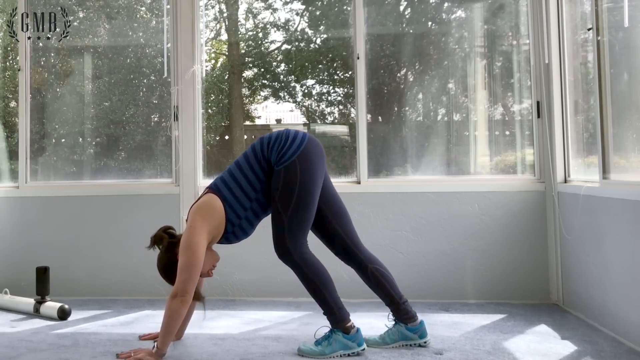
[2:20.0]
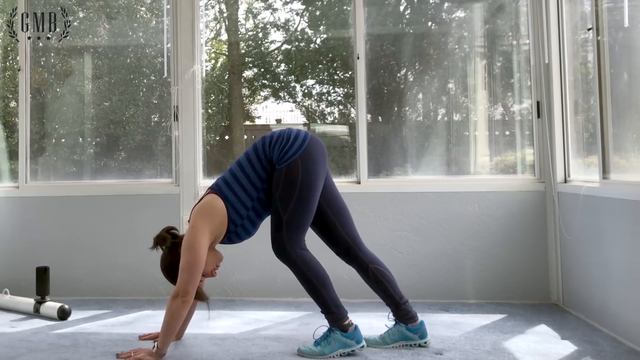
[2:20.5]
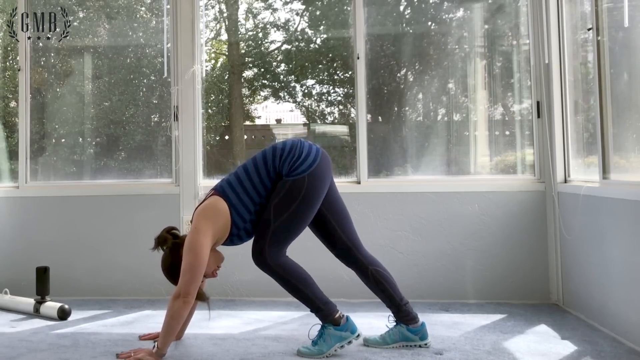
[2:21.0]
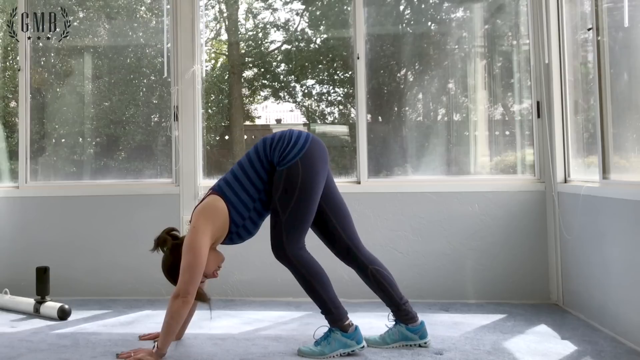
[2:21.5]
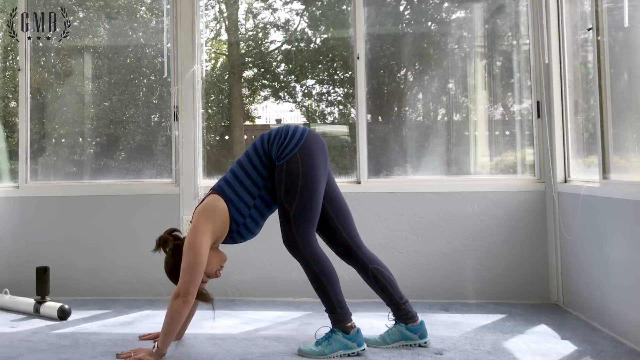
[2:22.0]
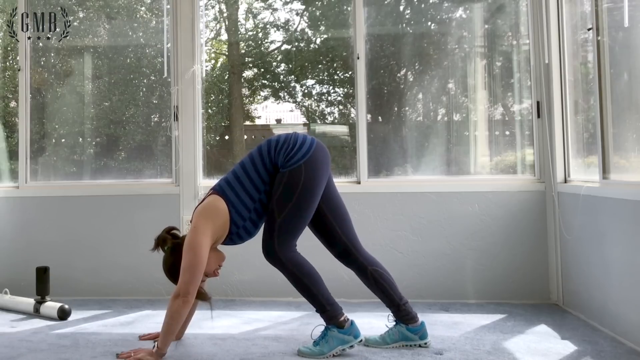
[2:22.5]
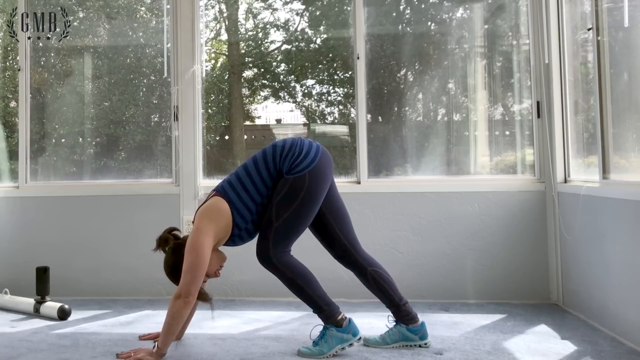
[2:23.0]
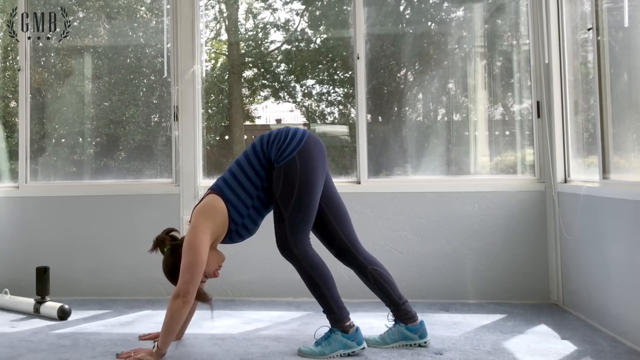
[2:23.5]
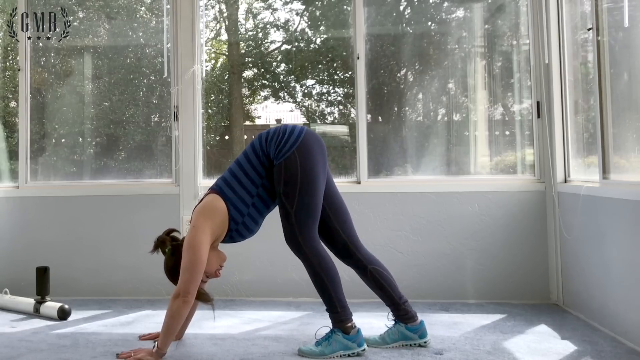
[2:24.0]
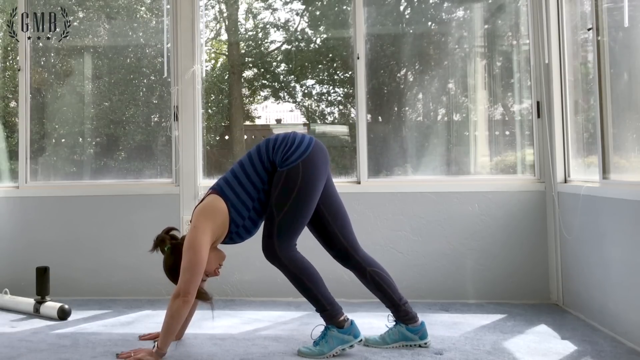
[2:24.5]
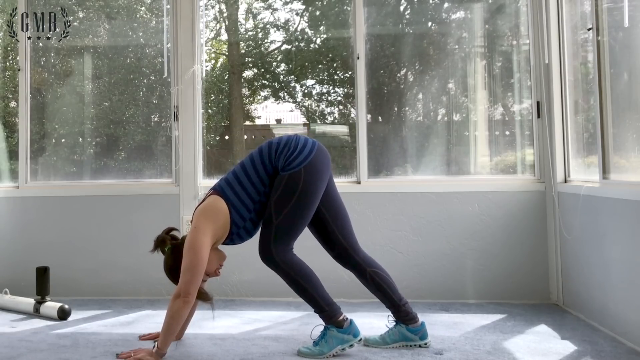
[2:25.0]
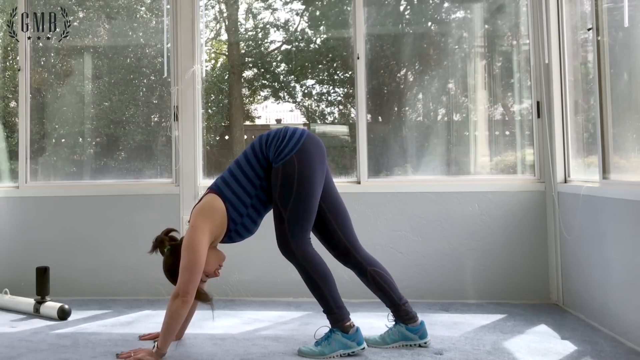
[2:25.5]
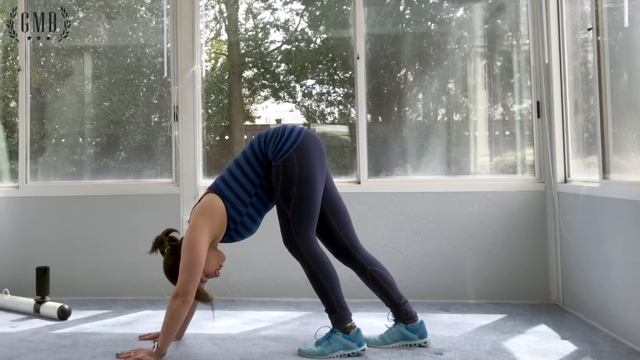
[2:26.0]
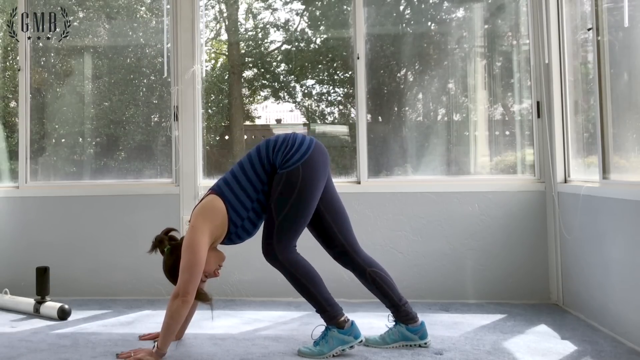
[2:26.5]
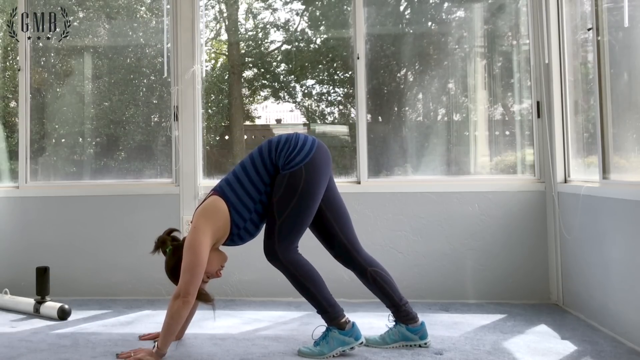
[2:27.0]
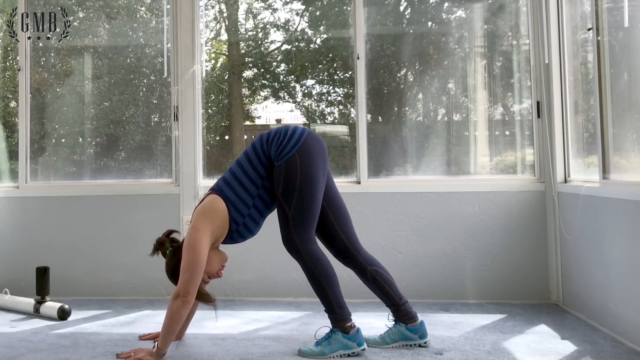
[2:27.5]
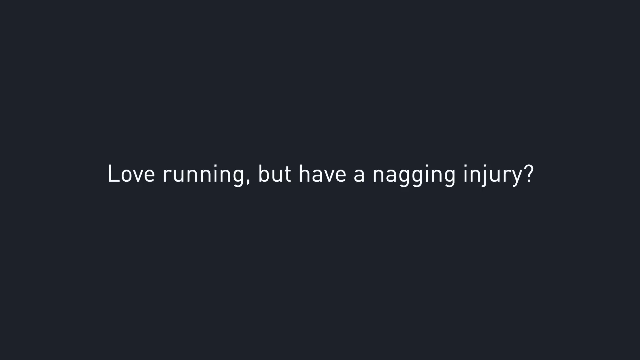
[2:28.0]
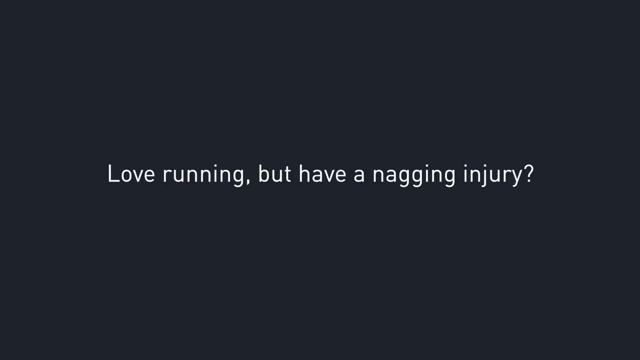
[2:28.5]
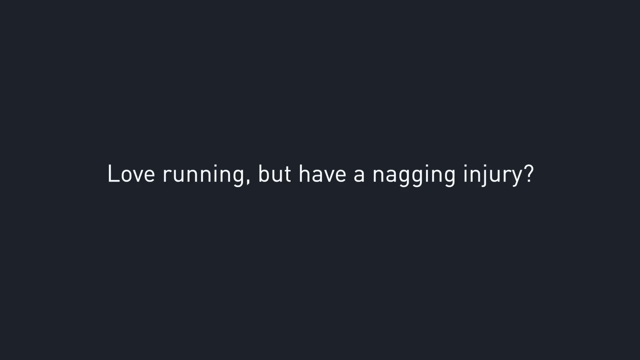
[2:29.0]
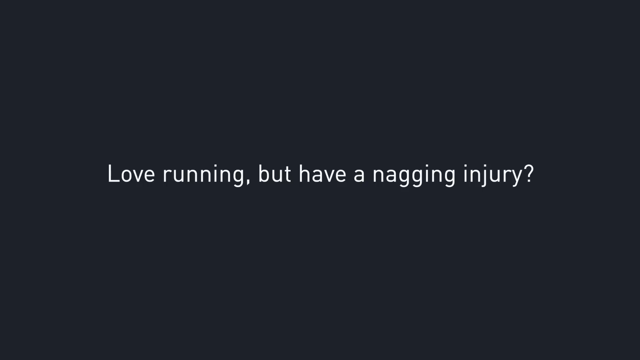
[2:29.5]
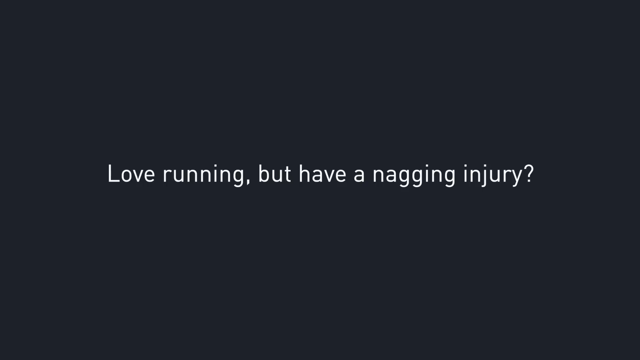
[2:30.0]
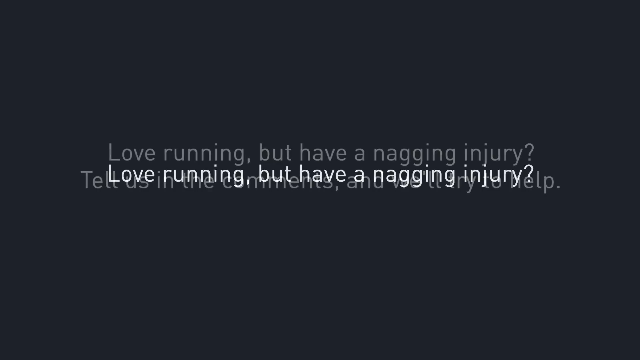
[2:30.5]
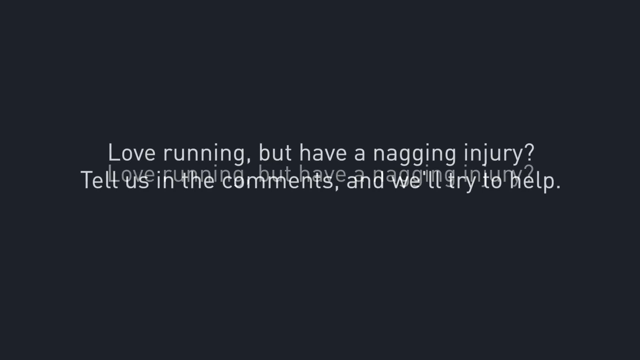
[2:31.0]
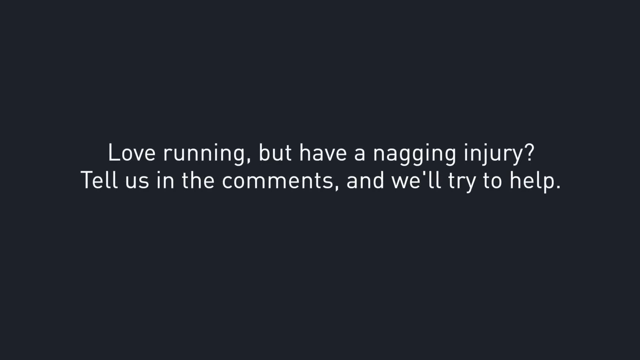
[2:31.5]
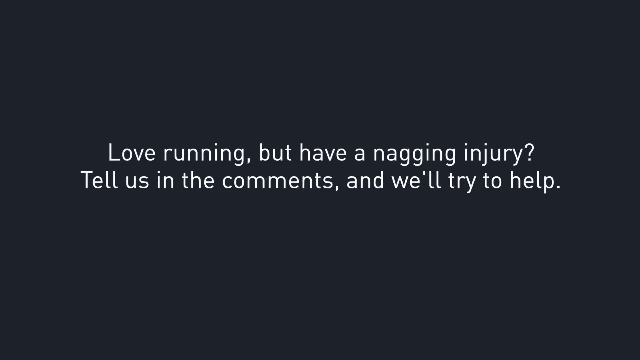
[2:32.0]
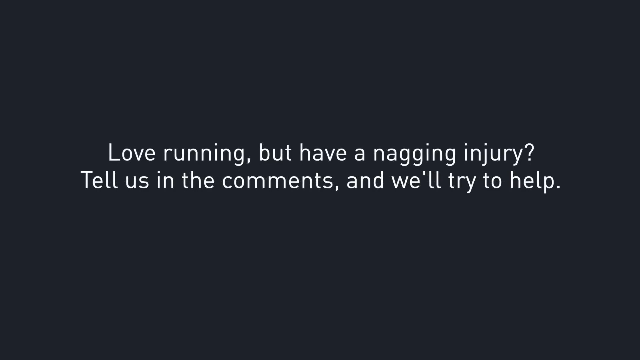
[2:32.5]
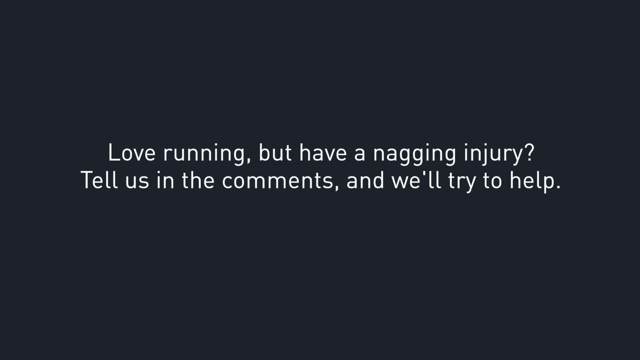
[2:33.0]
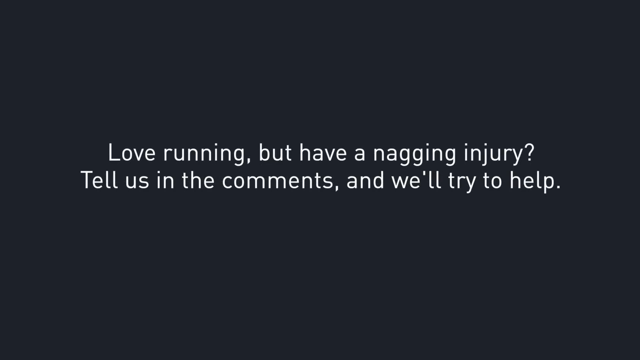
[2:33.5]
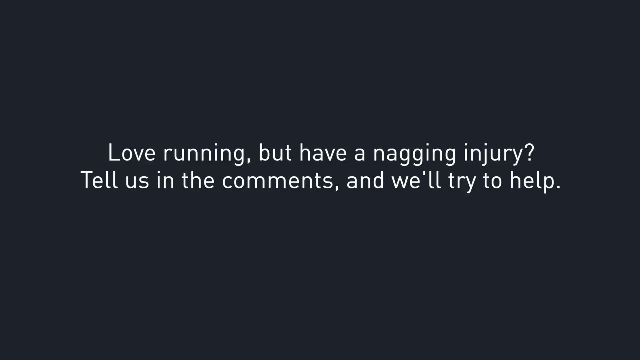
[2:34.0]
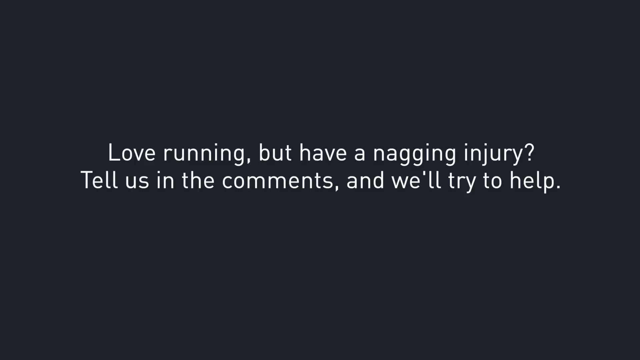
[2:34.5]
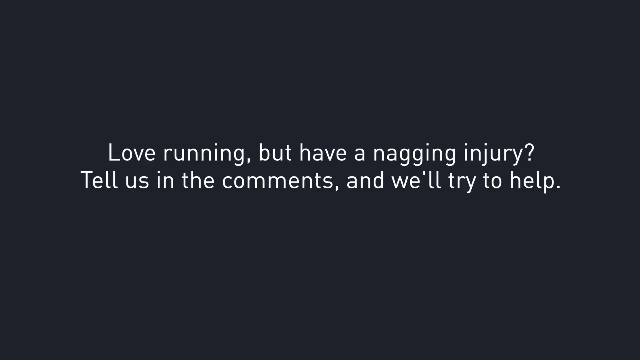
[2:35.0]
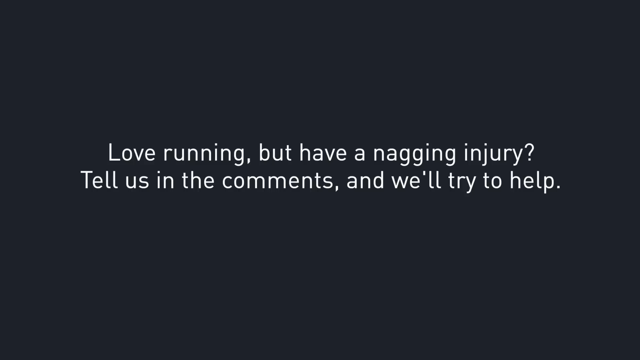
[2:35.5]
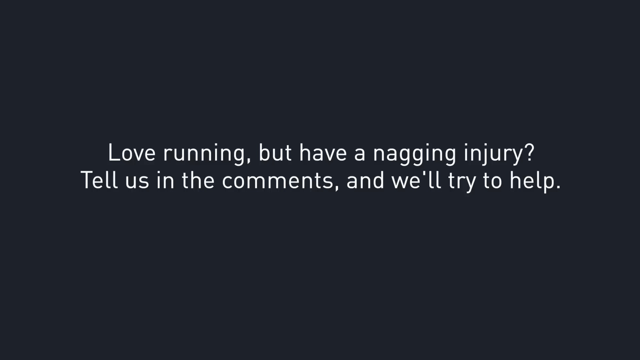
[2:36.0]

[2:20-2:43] A woman does an exercise or stretching routine, wearing a striped tank top in different shades of blue, very tight leggings and light blue tennis shoes. Her feet and hands are on the ground, her bottom is up in the air, and her head faces toward the left side of the screen. The leg in the foreground is slightly in front of the leg in the background, its knee bent slightly forward. She bends that knee forward more so it is level with her chest, then puts it back, several times, her bottom moving up and down as she does. The video switches to another screen with text that says "love running, but have a nagging injury," and more text appears underneath it: "tell us in the comment and we'll try to help." It then cuts to a black screen.